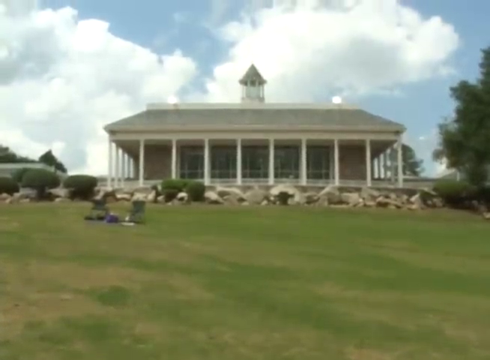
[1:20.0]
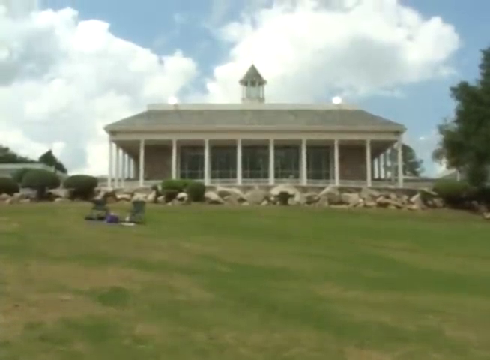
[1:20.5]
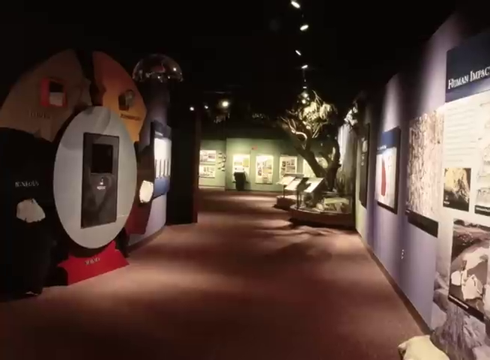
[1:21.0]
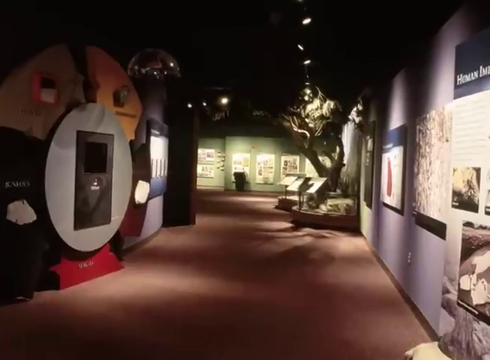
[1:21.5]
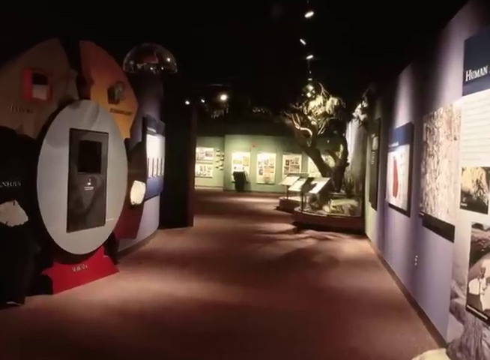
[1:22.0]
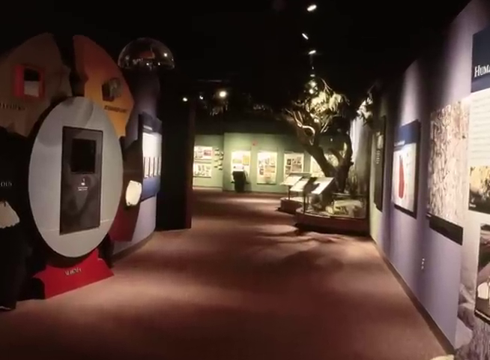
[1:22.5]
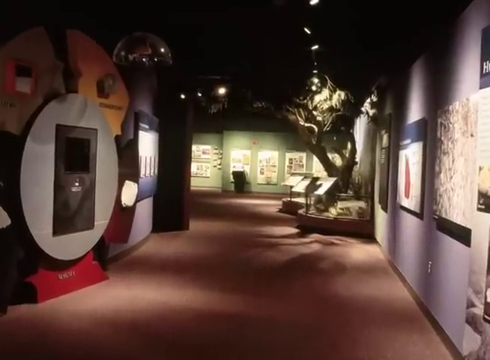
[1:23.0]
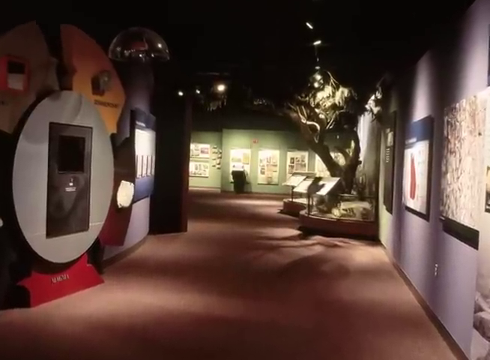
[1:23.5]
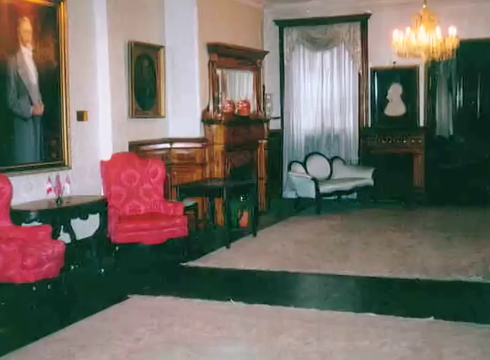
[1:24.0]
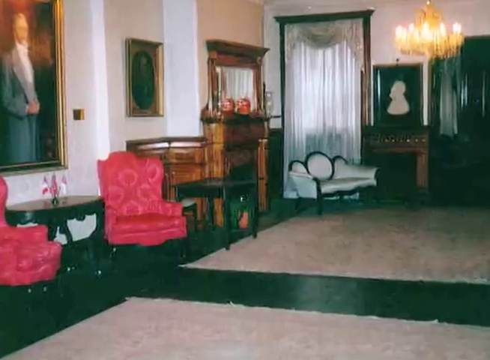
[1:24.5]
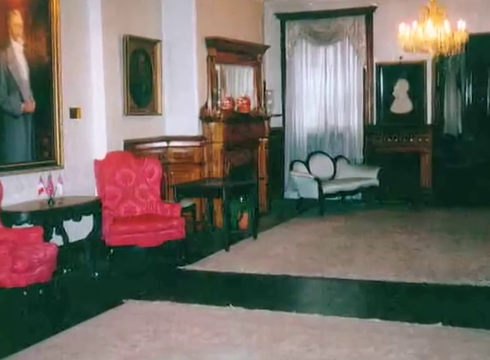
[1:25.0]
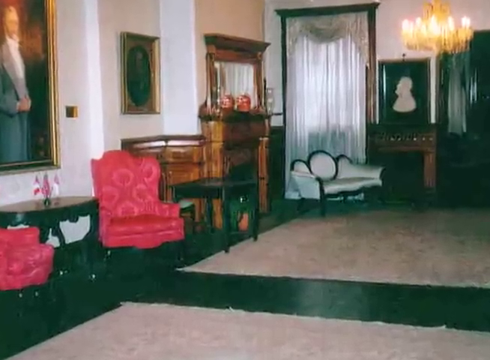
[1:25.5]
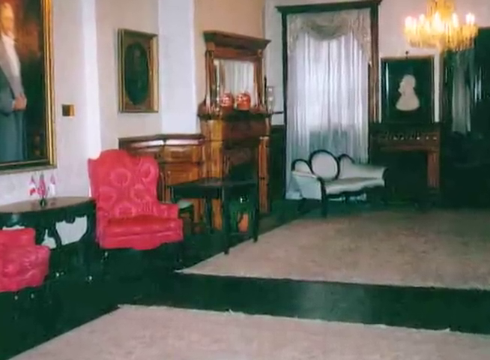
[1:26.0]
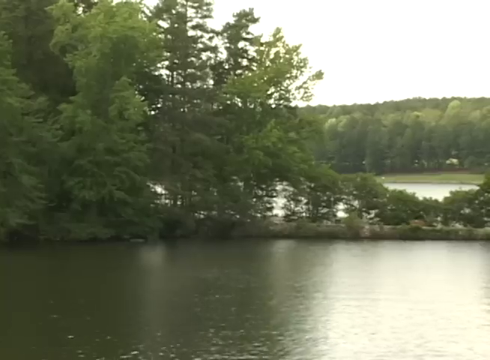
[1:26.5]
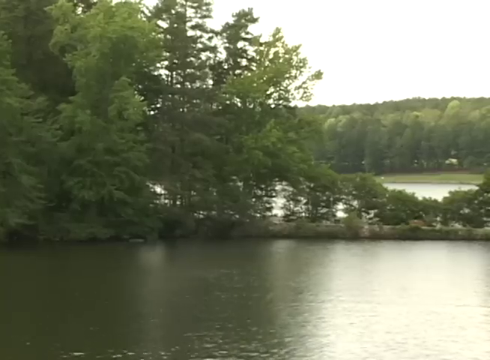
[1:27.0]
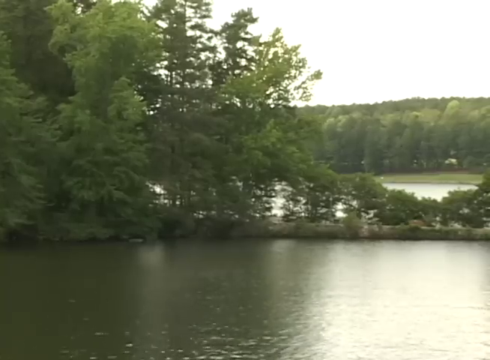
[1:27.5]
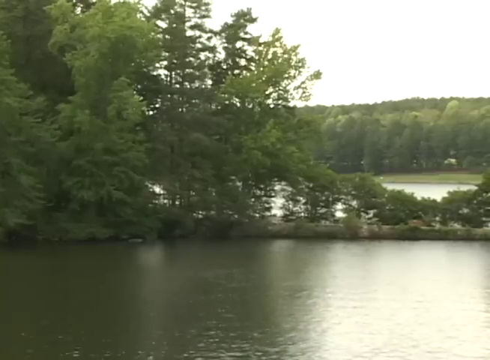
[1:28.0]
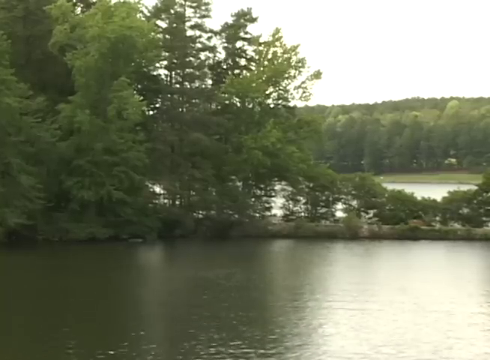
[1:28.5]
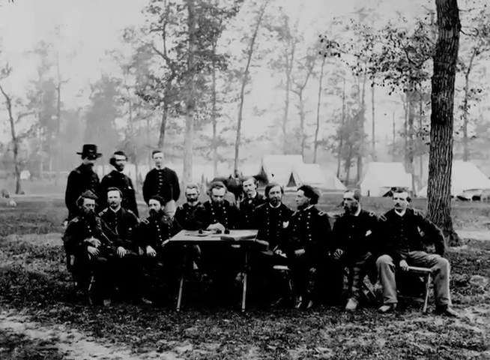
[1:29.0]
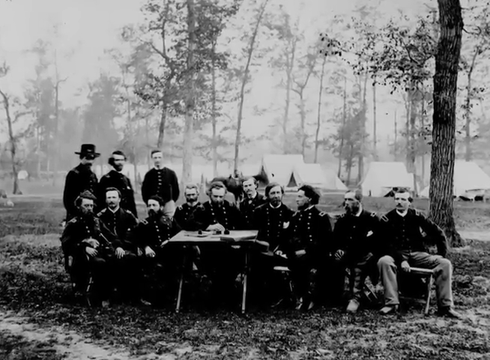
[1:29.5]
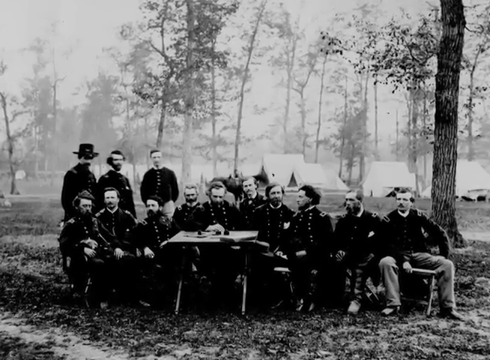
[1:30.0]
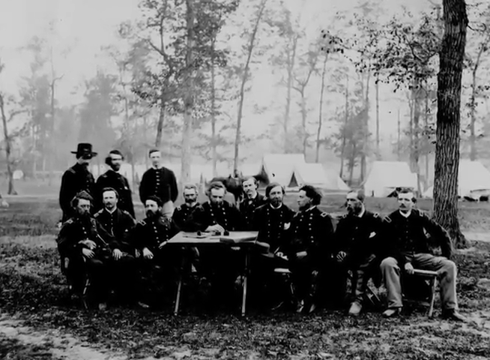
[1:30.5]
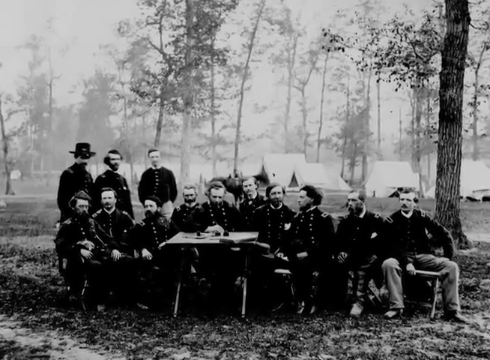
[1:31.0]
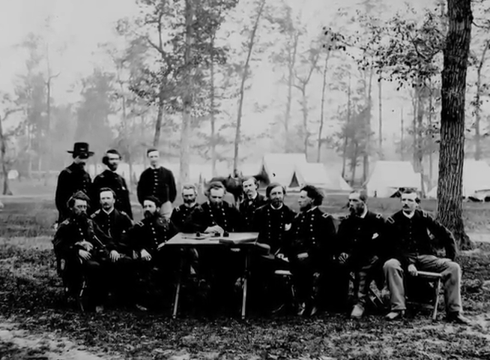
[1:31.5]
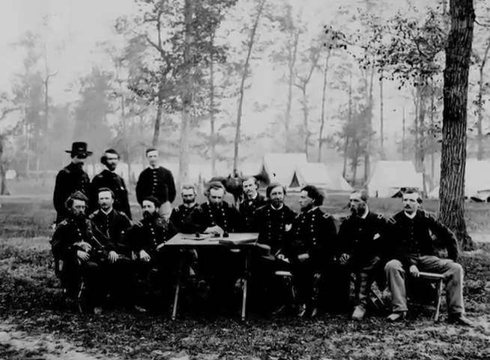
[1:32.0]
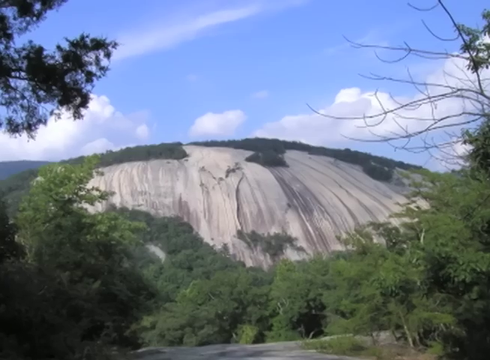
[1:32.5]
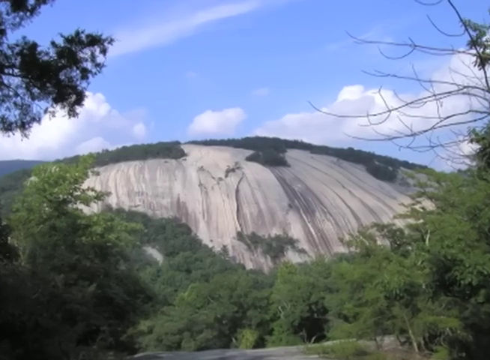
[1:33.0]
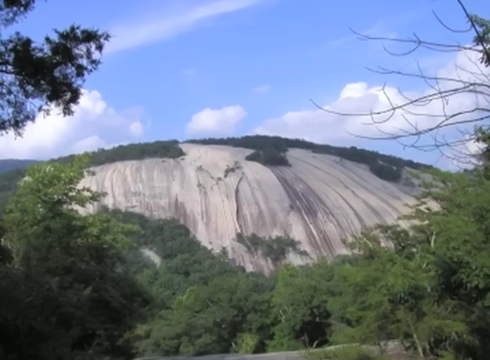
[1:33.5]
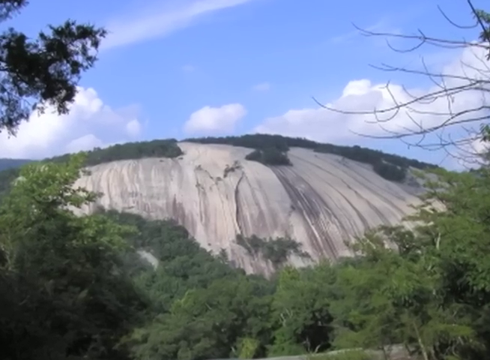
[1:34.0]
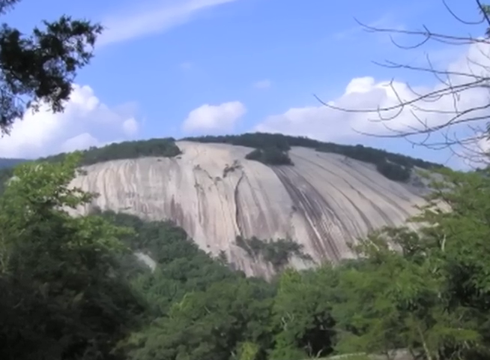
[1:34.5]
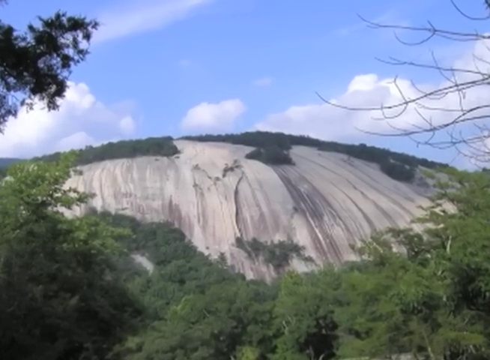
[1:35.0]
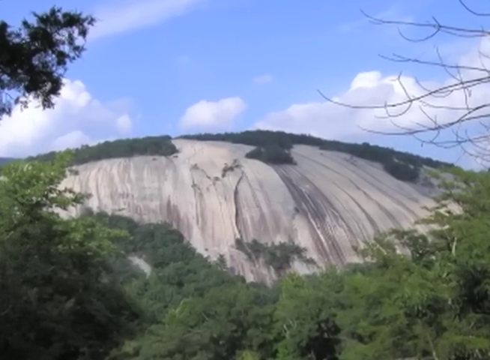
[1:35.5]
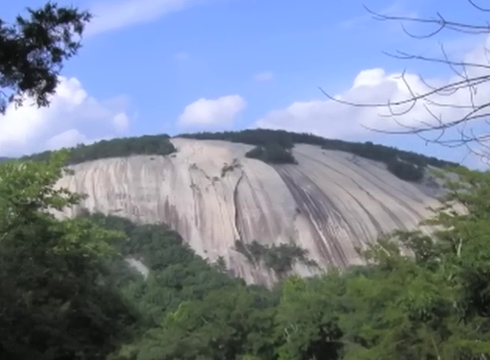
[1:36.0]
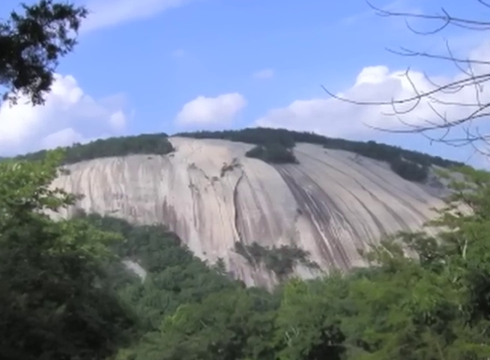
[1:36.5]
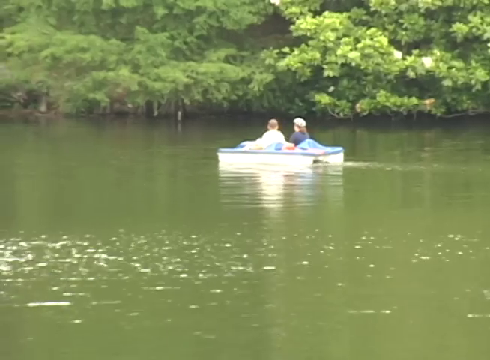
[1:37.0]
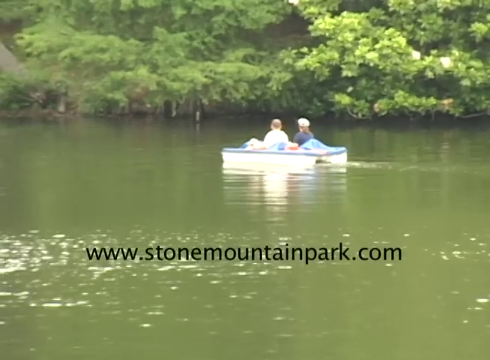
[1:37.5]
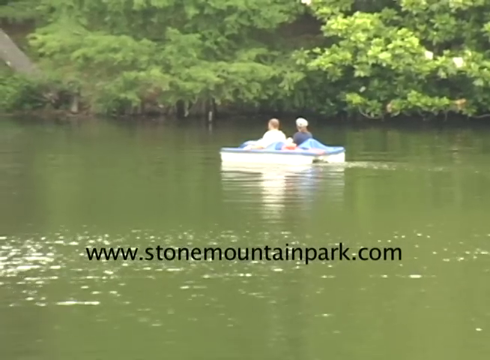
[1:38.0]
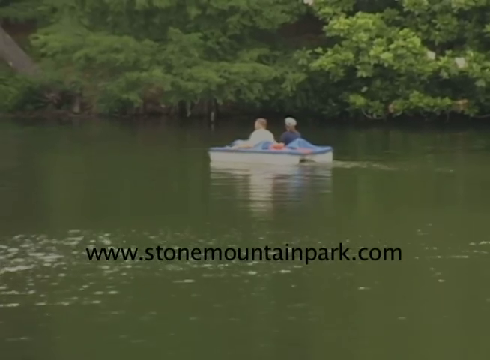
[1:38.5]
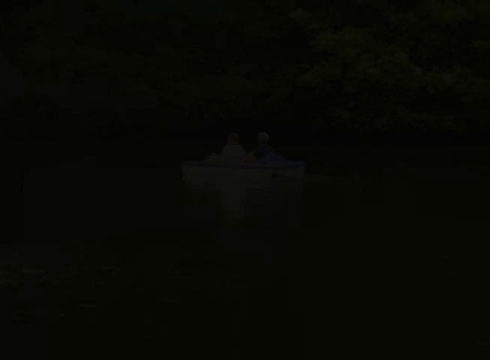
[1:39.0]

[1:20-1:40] The outside of a large square-looking building has a tower on the middle and top of the roof. The grass is green, some of it faded, suggesting it may be fall going into winter. The sky is cloudy but not very cloudy, with some blue showing through, and there are some trees. The view then moves inside the building to a bedroom or living room with pictures on the walls, red chairs, a little carpet, a black floor, a gold-colored chandelier and a brown mirror. Next comes a view of a pond or river with a bunch of trees all over. An old black and white photo shows about 10 to 15 people who may be soldiers, with trees behind them; it looks like it might be wintertime, with what looks like a little snow on some buildings or barns, and the photo looks like it is from the 1930s or 40s. The rock formation that looks like a balding head appears under blue skies with a few clouds. Two people row on the river or pond on one of those pedal boards, with green trees in the background, and black lettering reads "Stone Mountain Park.com". The picture fades to black.